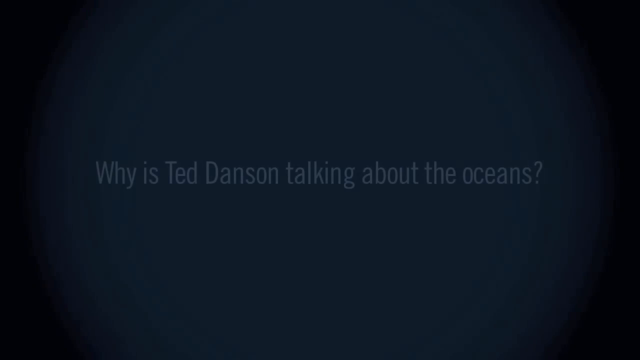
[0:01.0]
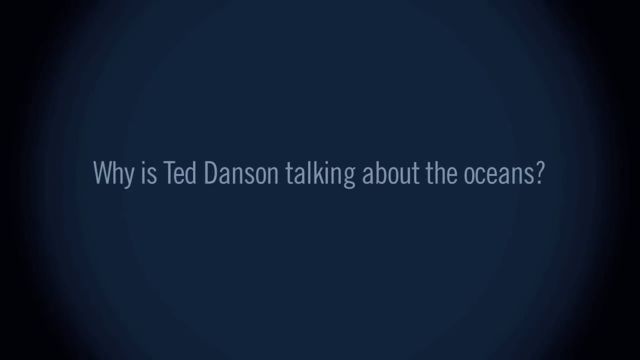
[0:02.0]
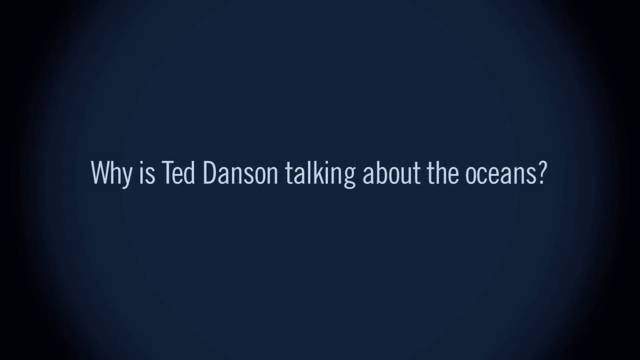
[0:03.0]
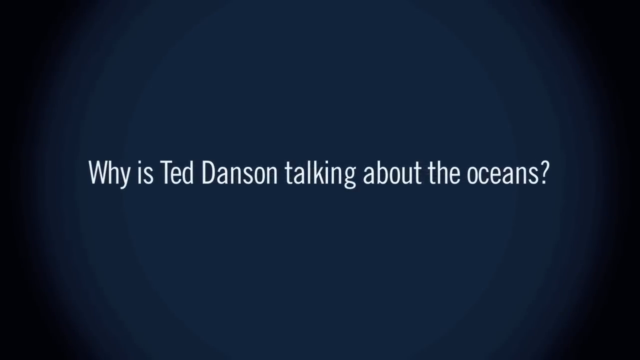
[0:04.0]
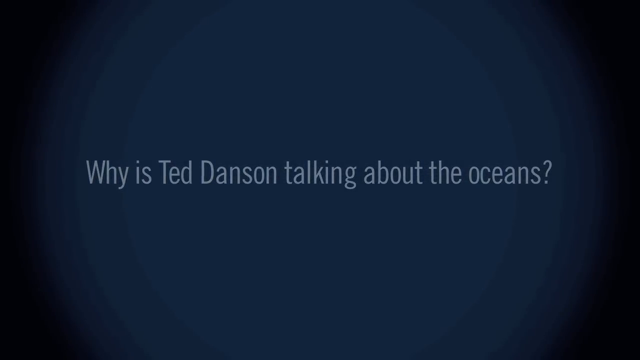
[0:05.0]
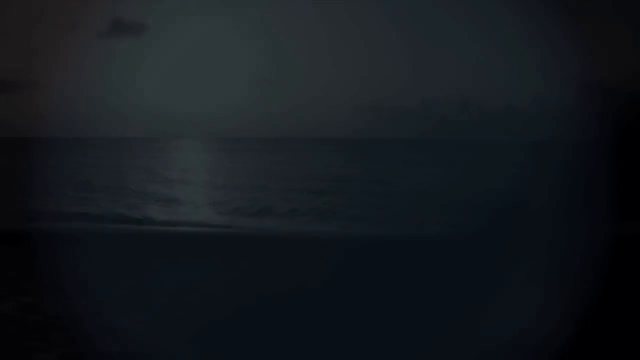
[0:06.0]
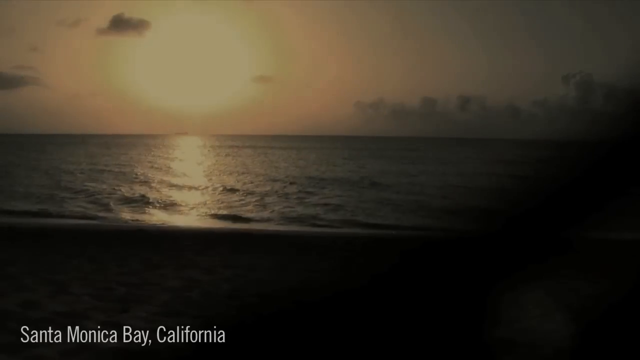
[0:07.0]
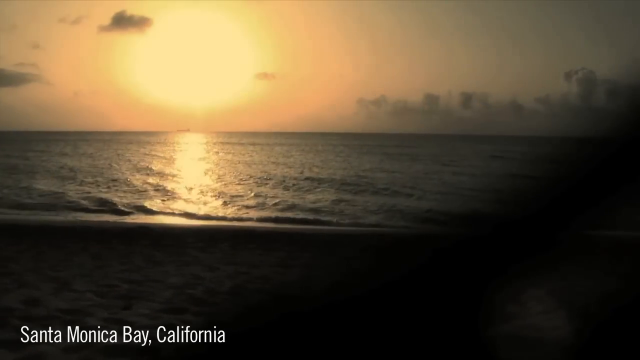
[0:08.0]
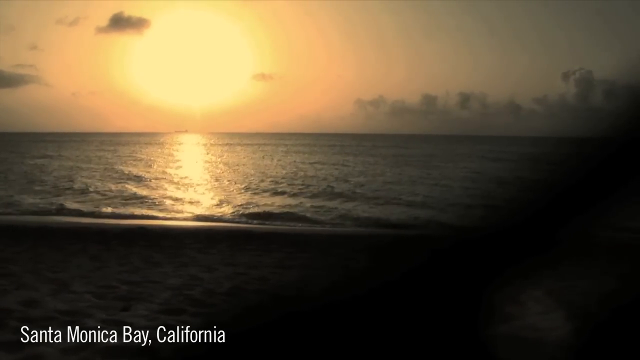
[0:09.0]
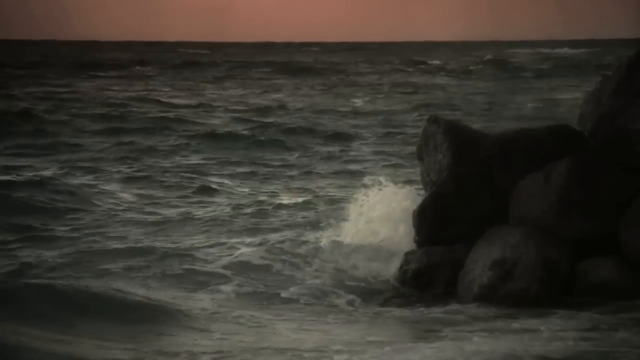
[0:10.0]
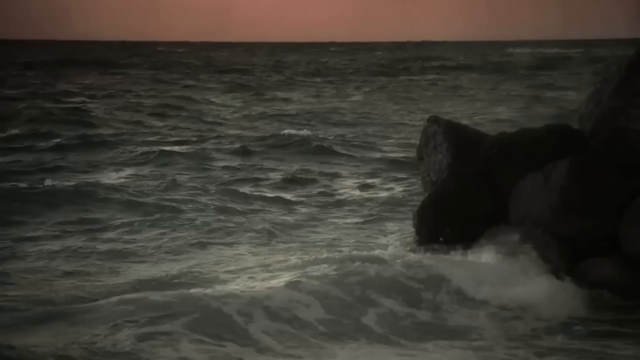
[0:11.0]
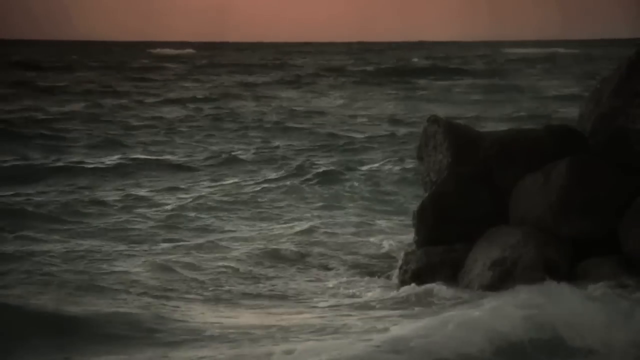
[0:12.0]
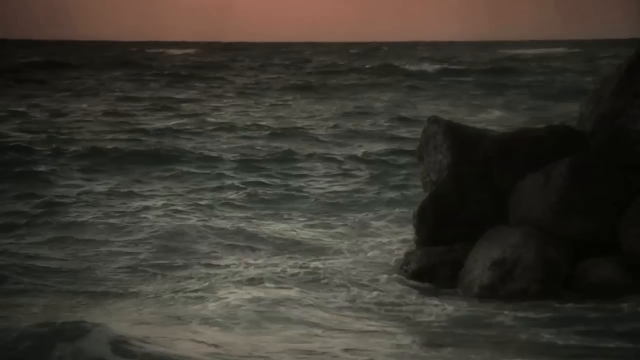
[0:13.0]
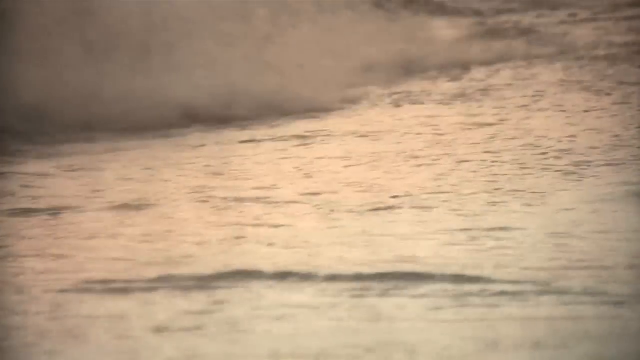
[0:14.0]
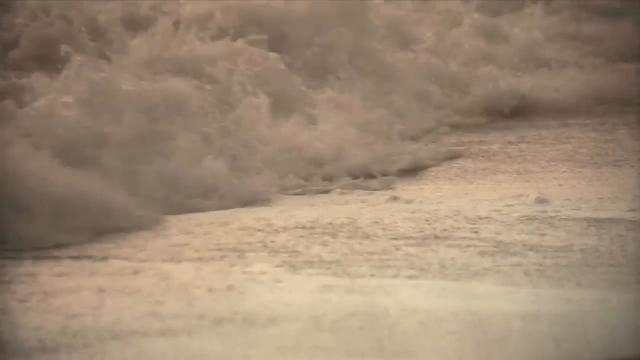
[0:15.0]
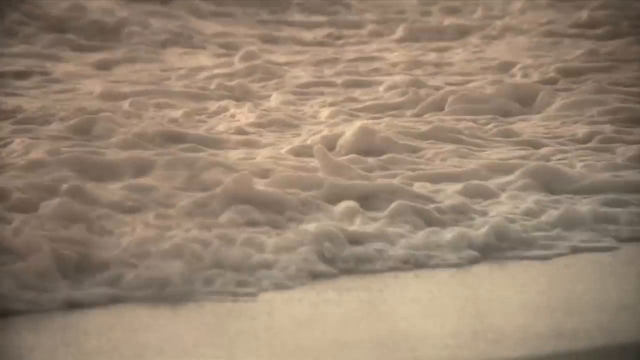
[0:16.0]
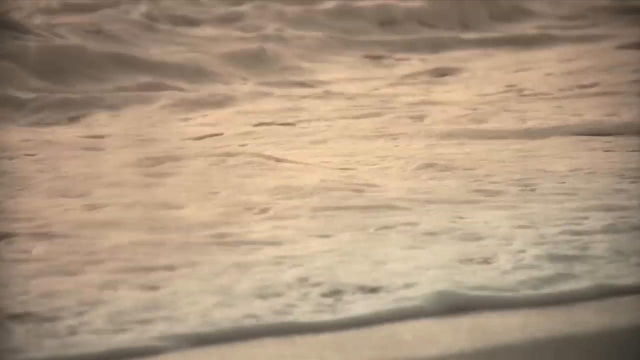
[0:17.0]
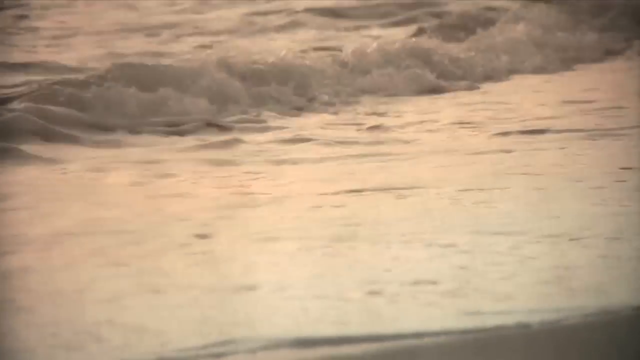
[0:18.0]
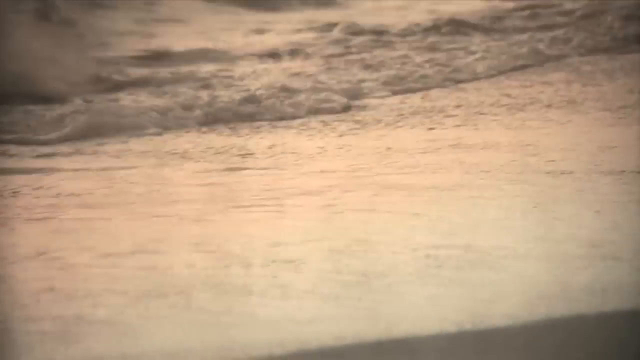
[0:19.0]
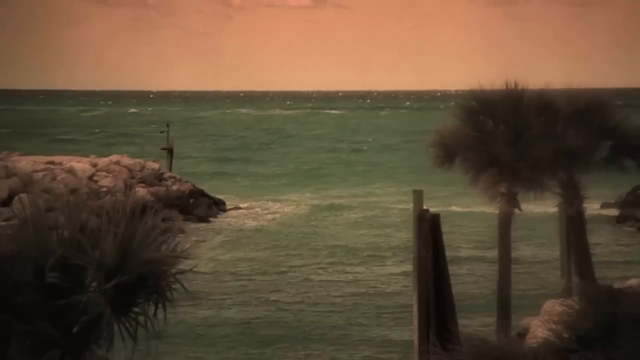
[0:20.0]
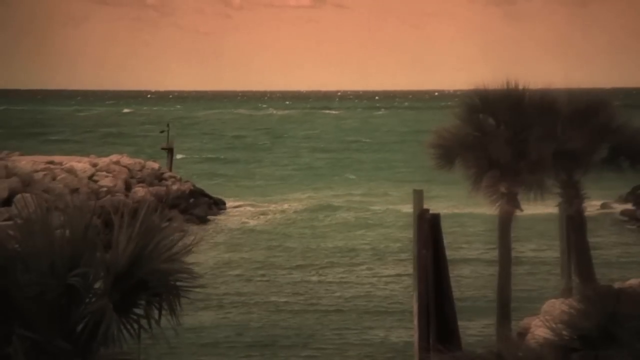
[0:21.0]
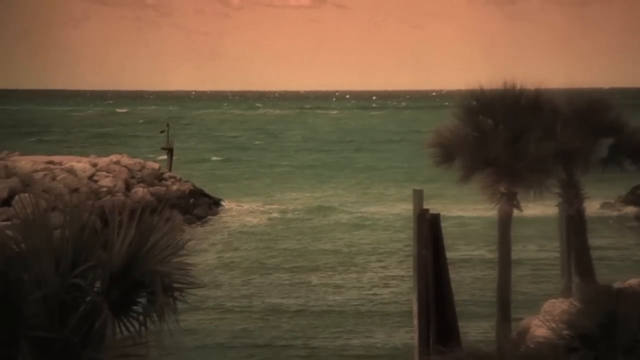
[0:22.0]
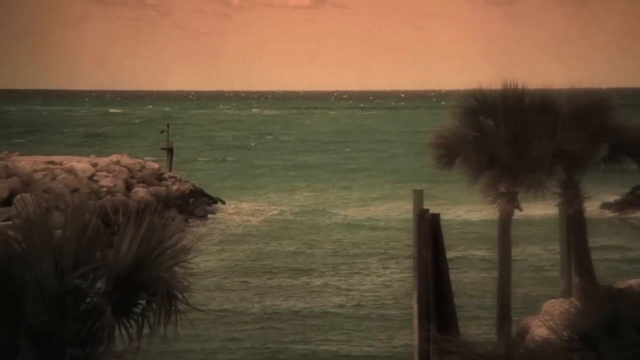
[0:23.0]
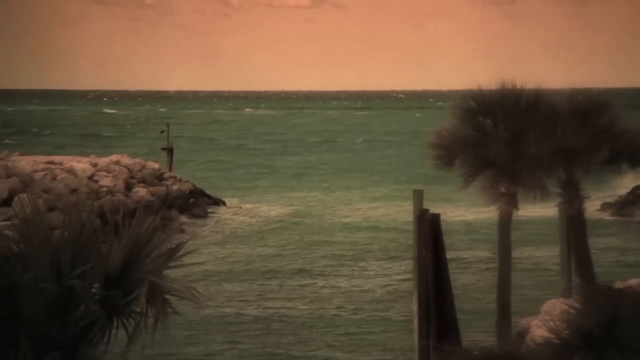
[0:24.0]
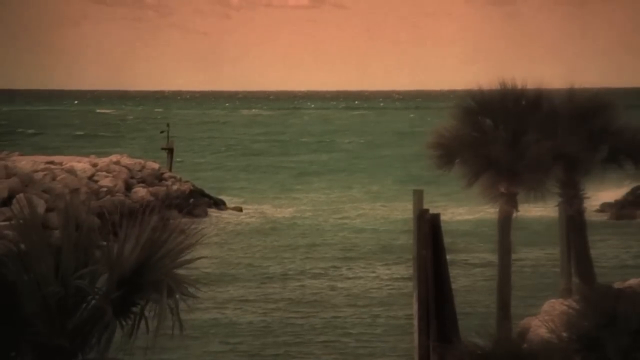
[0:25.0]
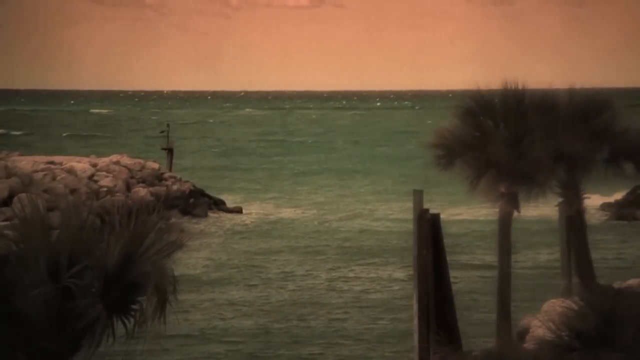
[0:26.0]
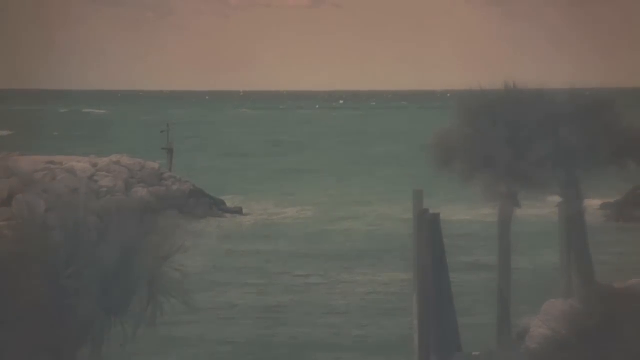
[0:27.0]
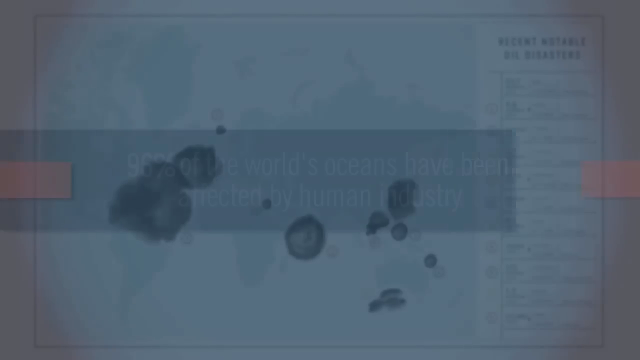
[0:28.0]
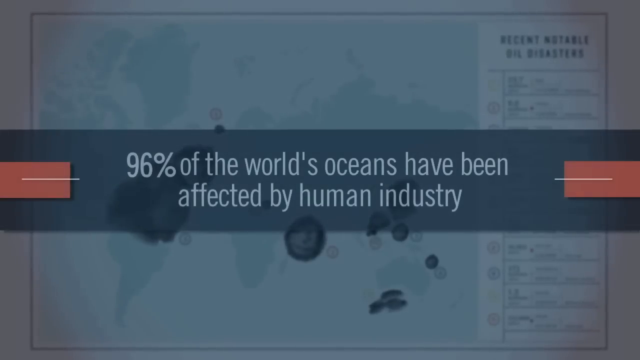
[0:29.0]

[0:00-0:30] The video starts on black and fades into a blue screen with white text in the middle that says "Why is Ted Danson talking about the oceans?" It then fades into a beach scene at sunset, with an orange sky, calm waters and the sun right over the water. The view changes to waves crashing against a rock barge with the same orange sky in the background, then to a close-up at the beach where waves crash against the shoreline. Next comes a far shot of a beach with a rock barge out in the water, three or four palm trees with the wind blowing, and two structures. That scene fades into a graphic that says "96 percent of the worlds oceans have been affected by human industry," overlaid on a graphic that says "Recent Notable Oil Disasters" with a map of an ocean and oil spills.